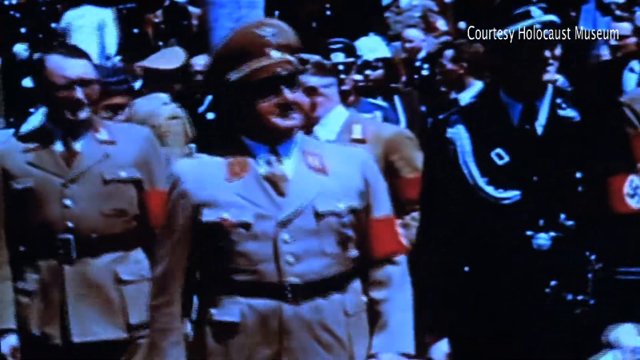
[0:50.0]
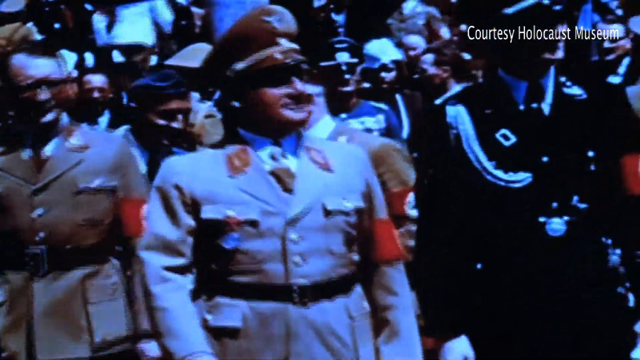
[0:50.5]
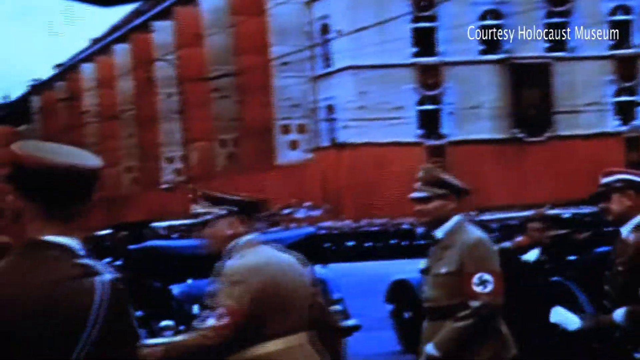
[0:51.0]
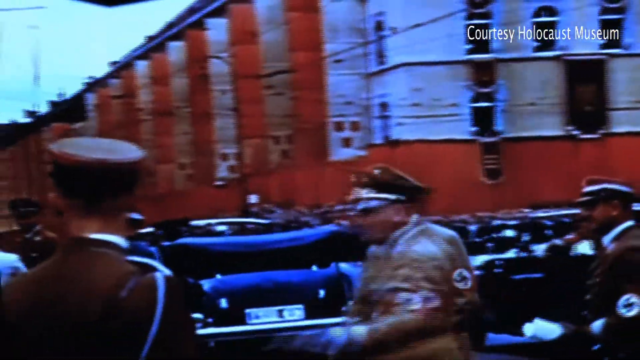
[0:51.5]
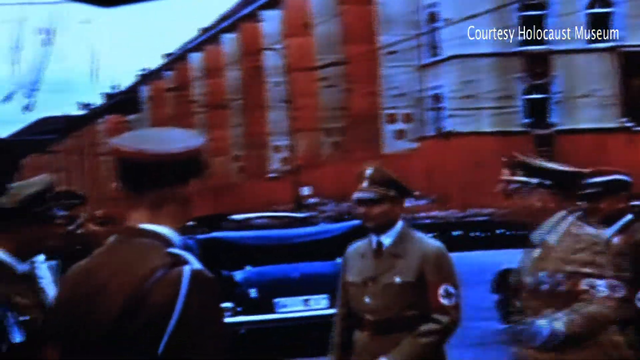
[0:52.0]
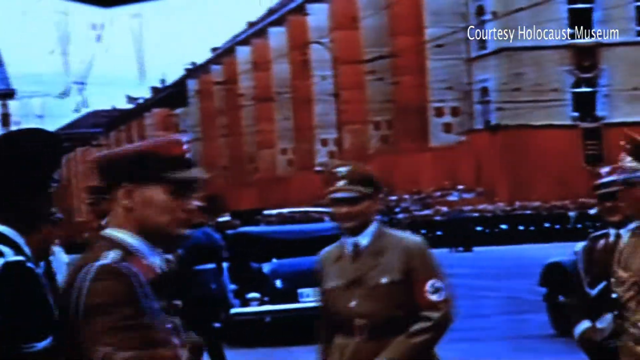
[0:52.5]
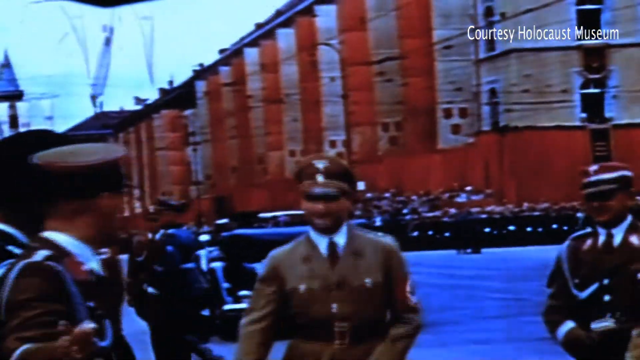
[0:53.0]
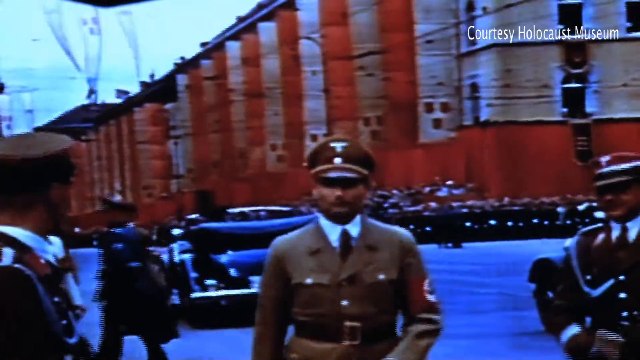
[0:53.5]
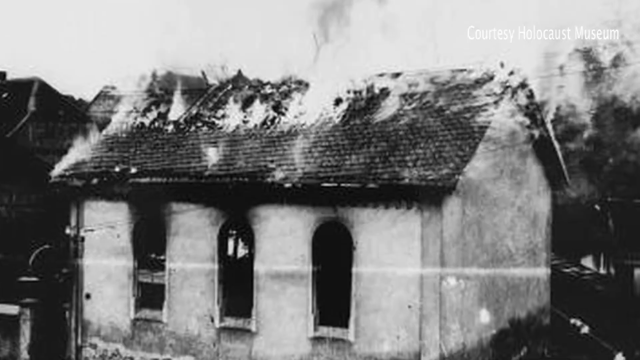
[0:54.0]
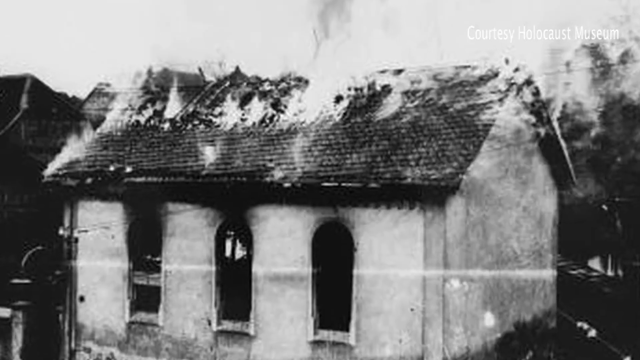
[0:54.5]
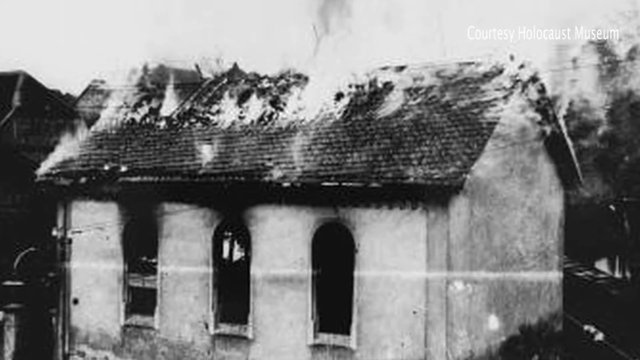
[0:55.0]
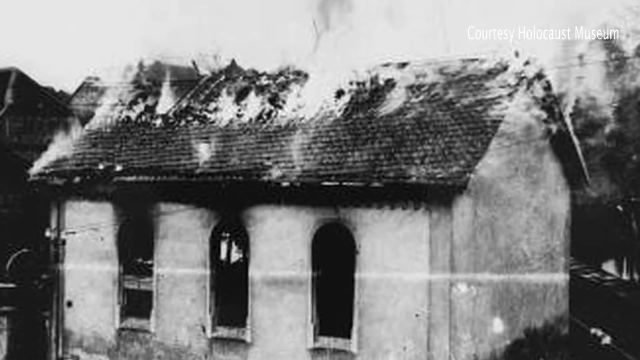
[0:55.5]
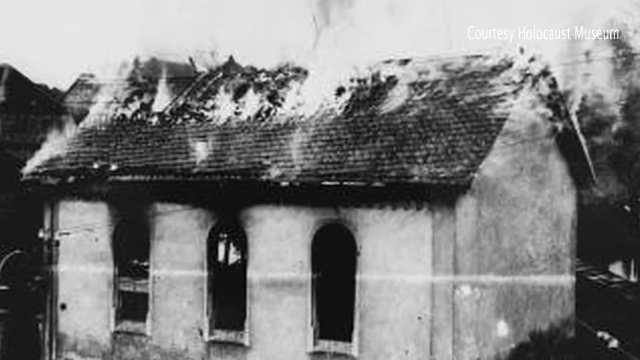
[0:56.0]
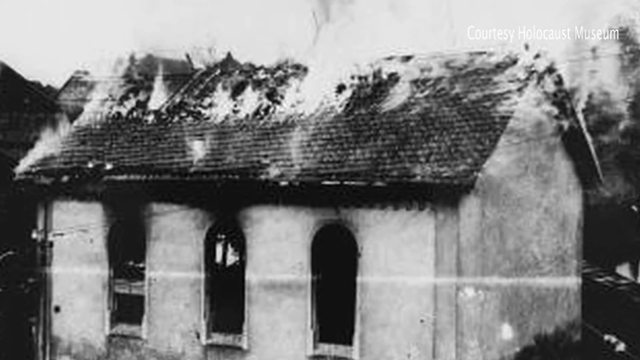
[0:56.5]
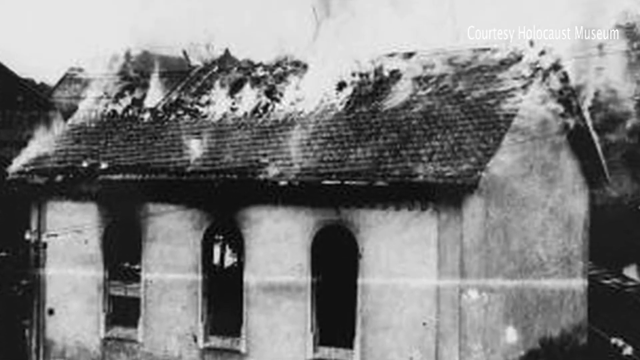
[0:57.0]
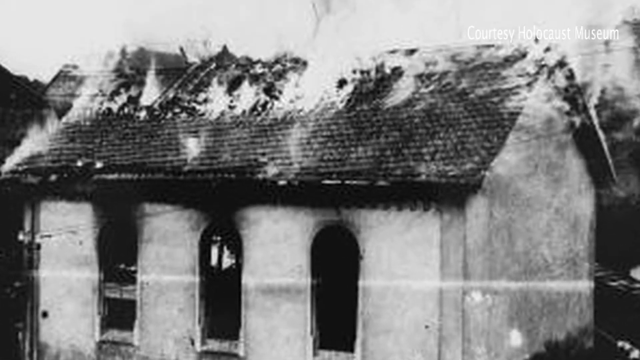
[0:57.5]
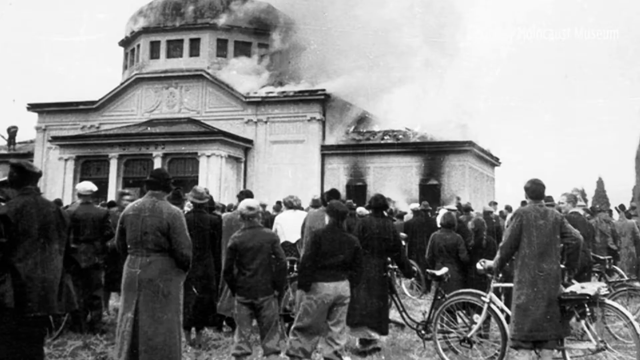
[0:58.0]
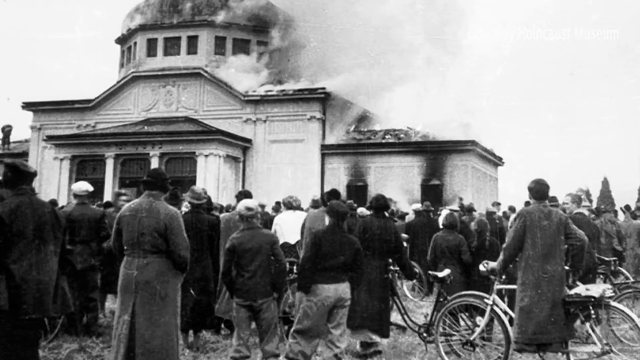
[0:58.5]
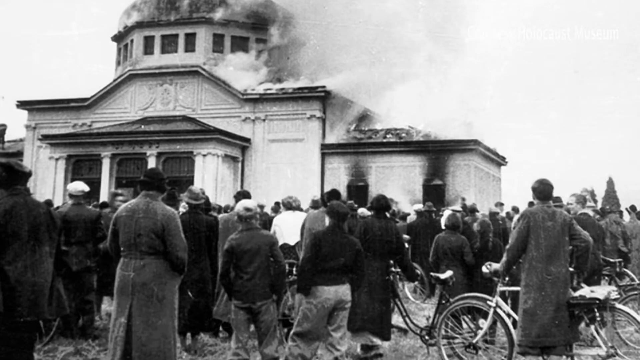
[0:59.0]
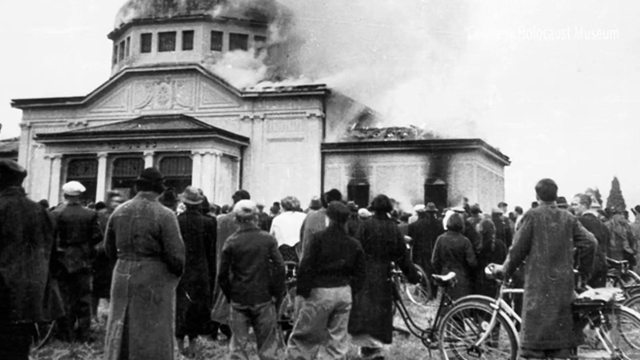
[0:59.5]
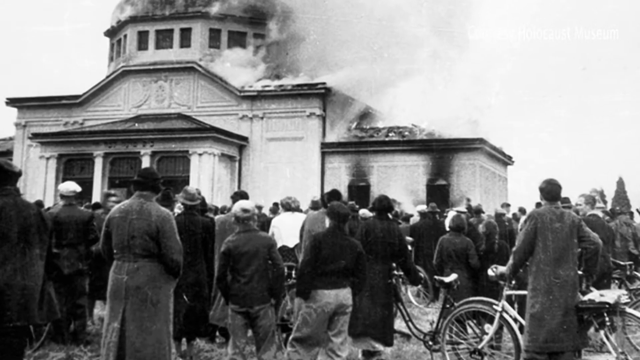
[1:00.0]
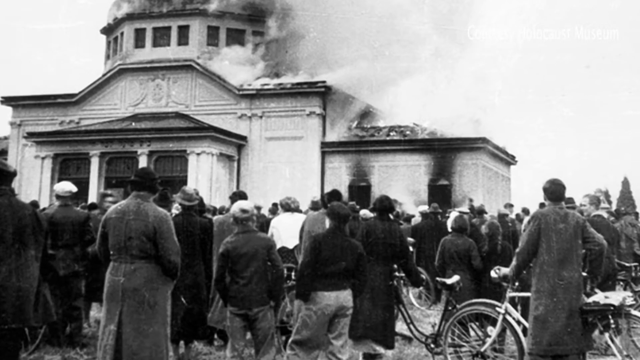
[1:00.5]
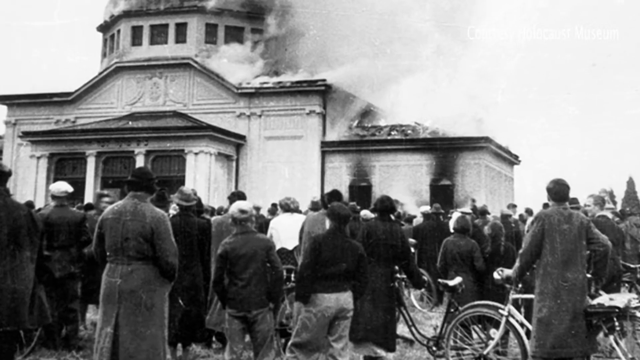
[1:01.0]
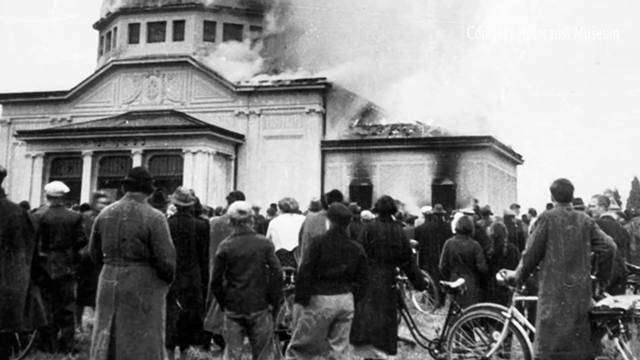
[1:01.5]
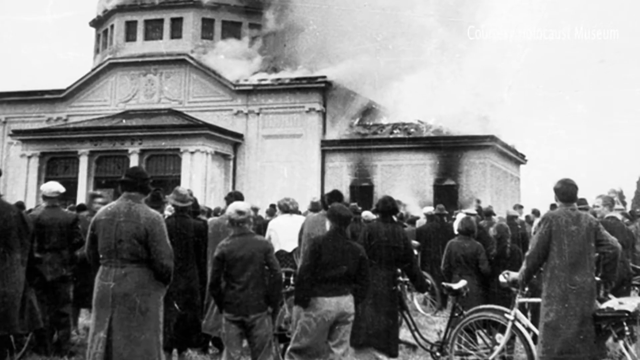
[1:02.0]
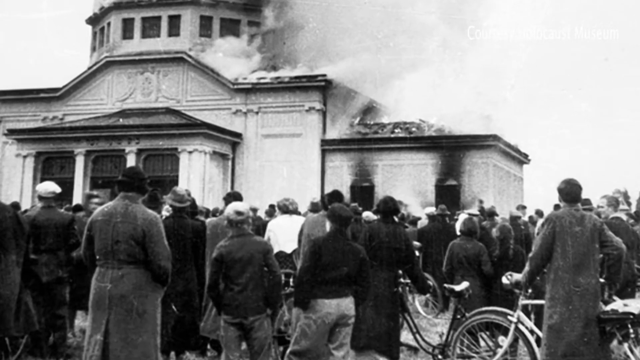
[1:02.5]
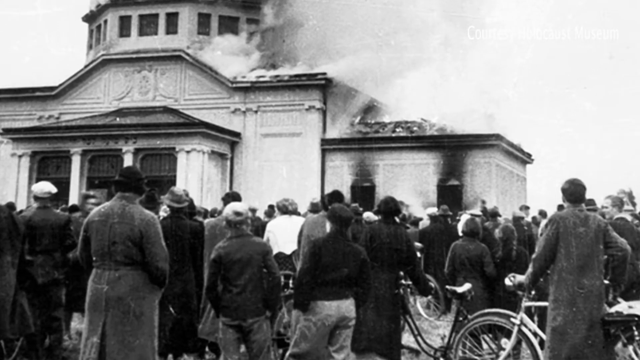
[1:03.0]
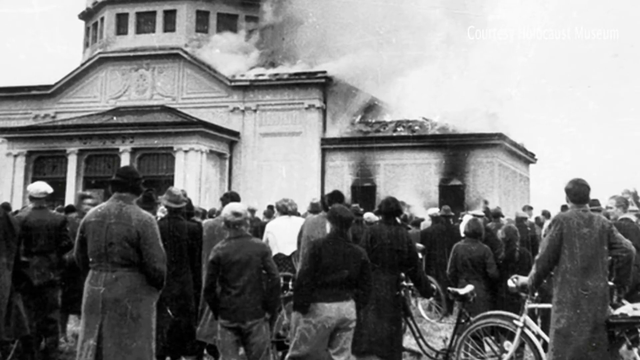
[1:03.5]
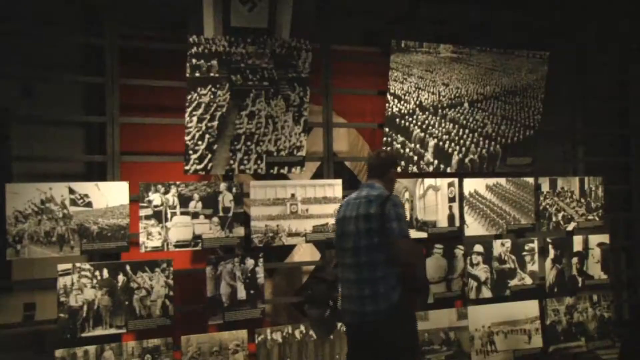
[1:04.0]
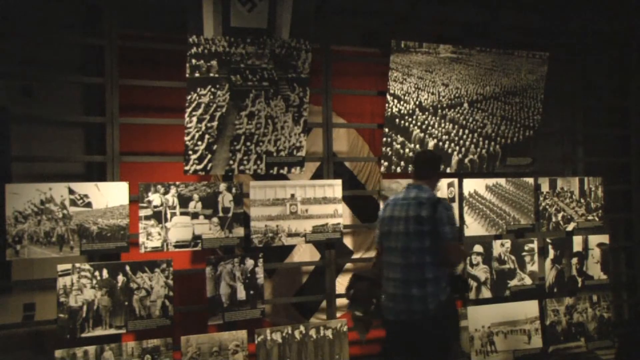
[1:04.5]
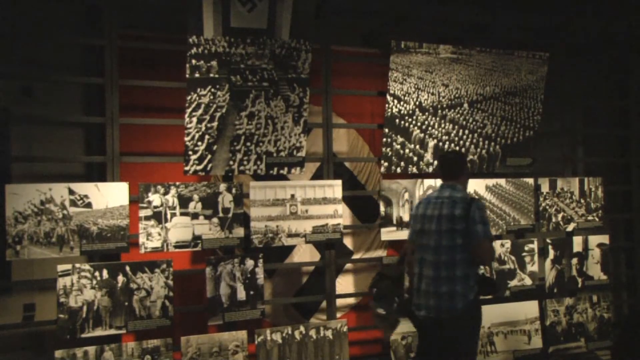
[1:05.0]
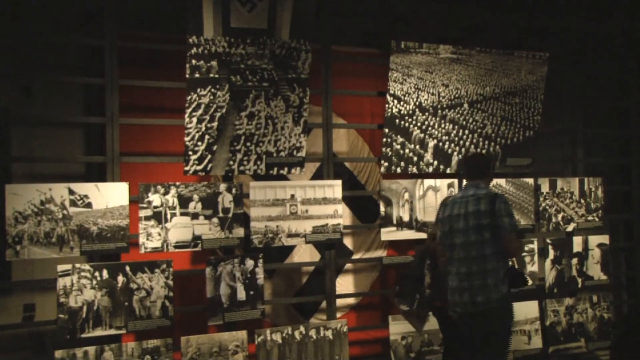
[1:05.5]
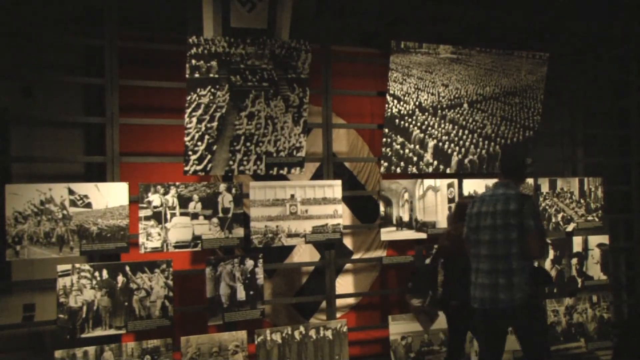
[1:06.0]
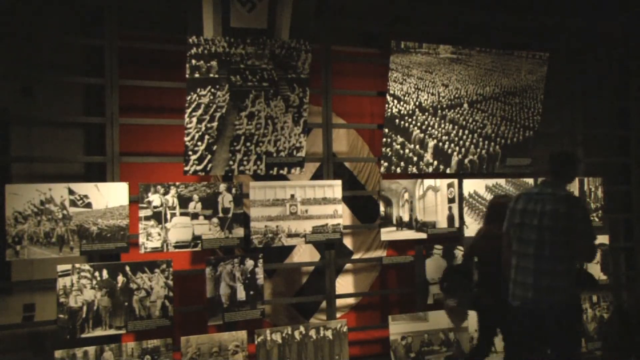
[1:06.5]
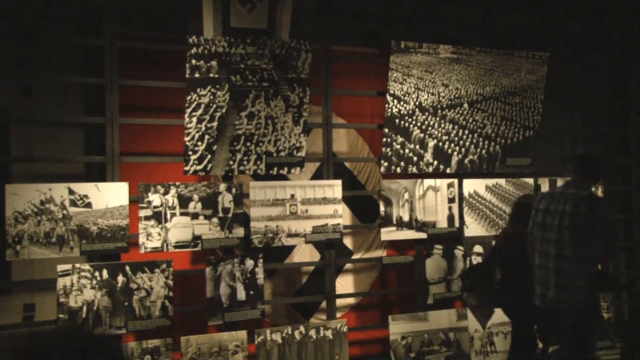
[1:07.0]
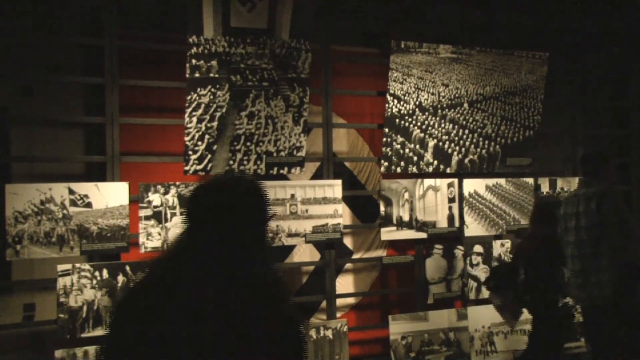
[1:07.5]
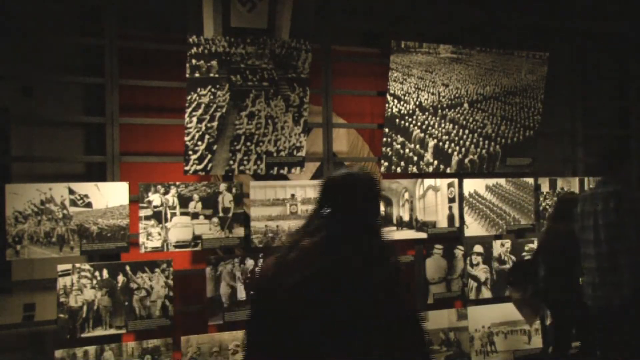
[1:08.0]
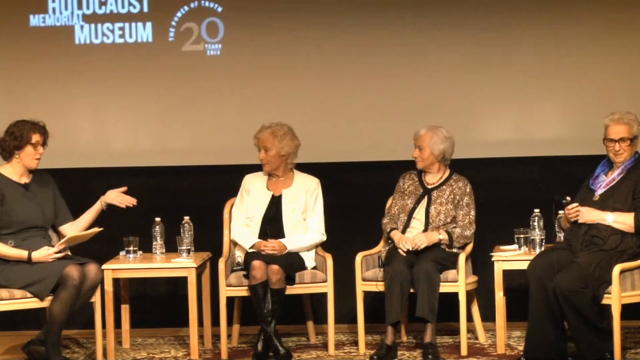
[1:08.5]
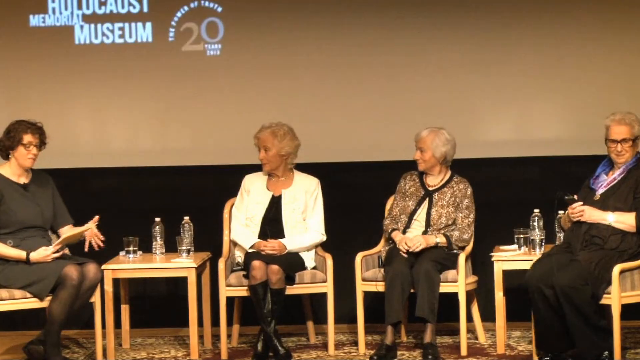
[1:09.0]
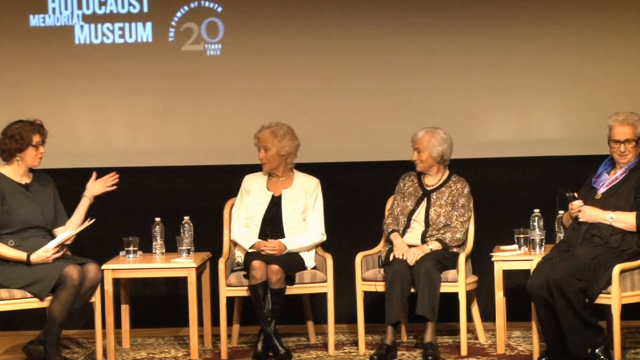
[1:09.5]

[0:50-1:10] Made by CNS, the video shows people very happy in a parade, with a big puppet in the parade. Jewel Polly, a Kristallnacht survivor, is shown, and the image fades to a picture of her as a young girl. Two Jewish storefronts are destroyed, their glass fronts broken. Hebrew writing that is part of the Talmud appears, then two men stand holding a large document. Broken wires are in the windows of a building. A museum has sepia-toned photographs, and a person looks at them. A destroyed Talmud with Hebrew writing is shown. Men dressed in Nazi uniforms with Nazi insignia on their arms walk very happily in a parade. A building burns, then a larger building burns while many people, over 50, watch. The scene returns to the museum, showing other pictures. Jewel Polly and others are interviewed by a newswoman. Finally a very happy man is shown.